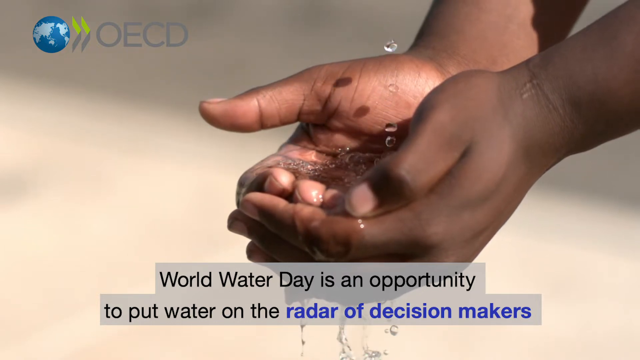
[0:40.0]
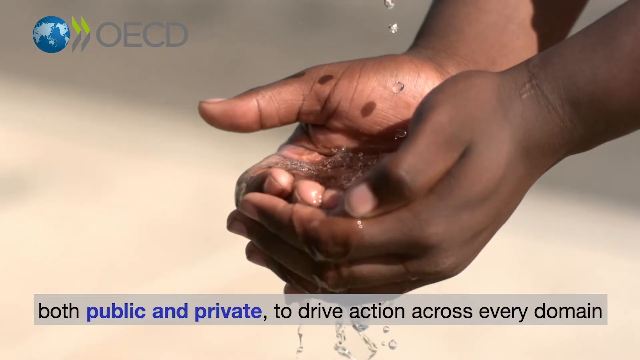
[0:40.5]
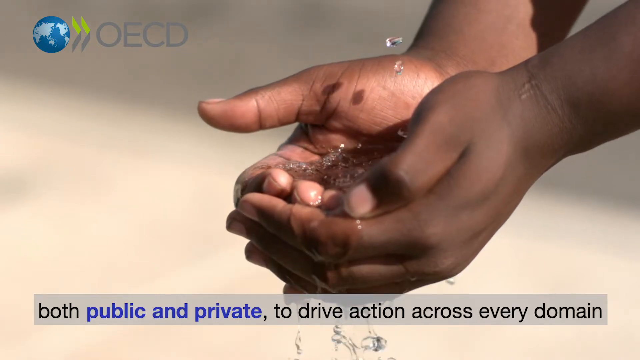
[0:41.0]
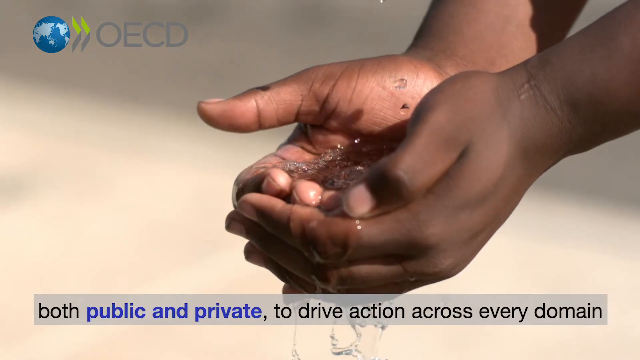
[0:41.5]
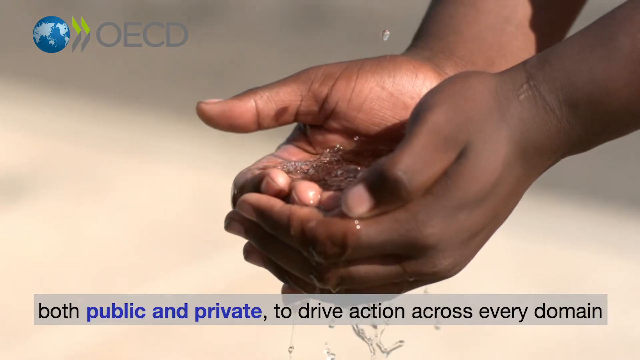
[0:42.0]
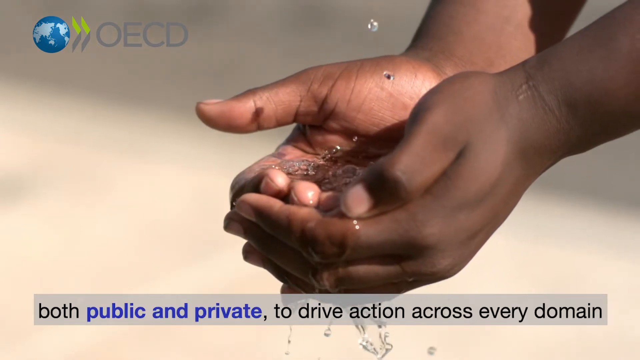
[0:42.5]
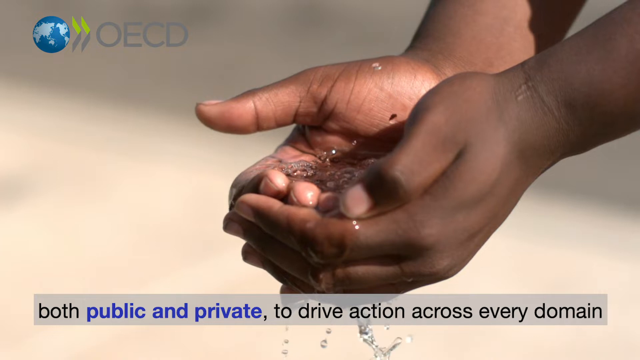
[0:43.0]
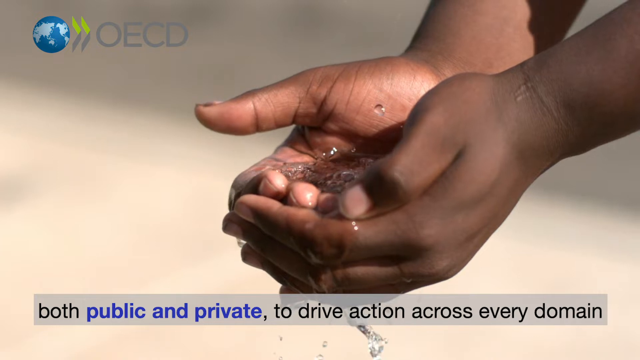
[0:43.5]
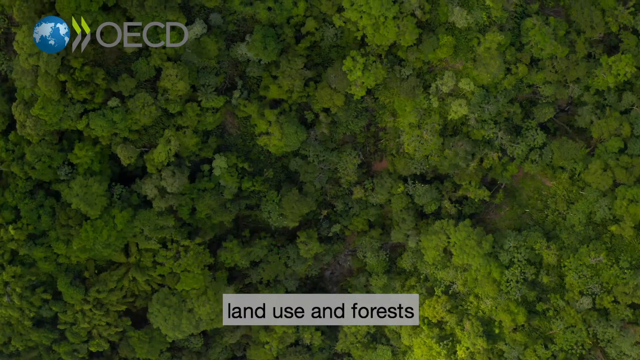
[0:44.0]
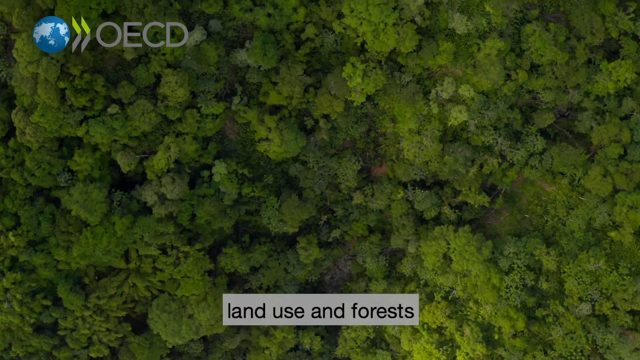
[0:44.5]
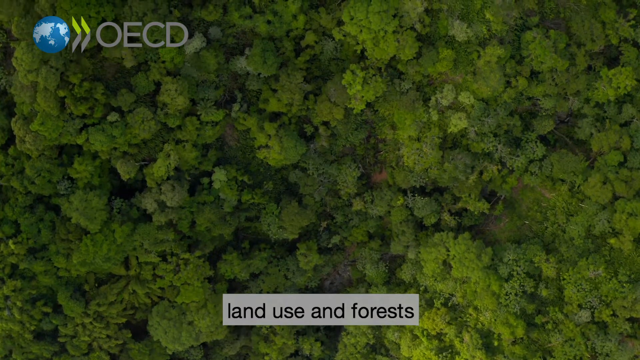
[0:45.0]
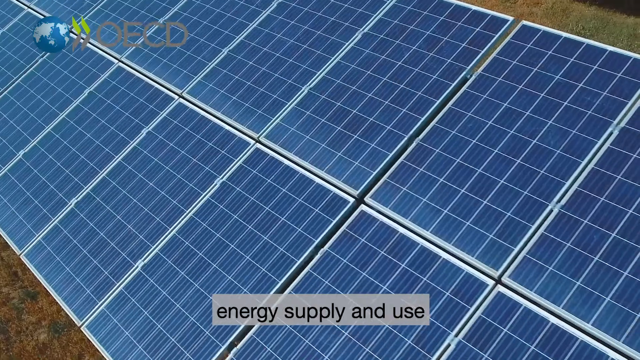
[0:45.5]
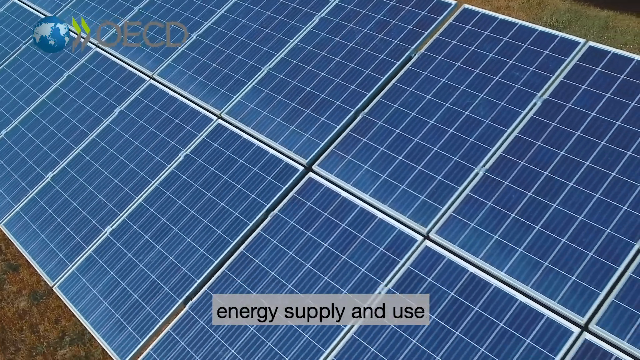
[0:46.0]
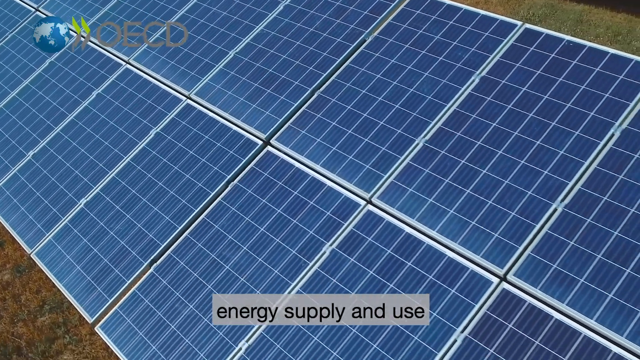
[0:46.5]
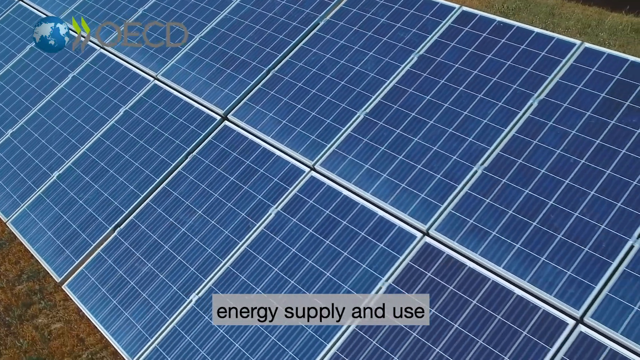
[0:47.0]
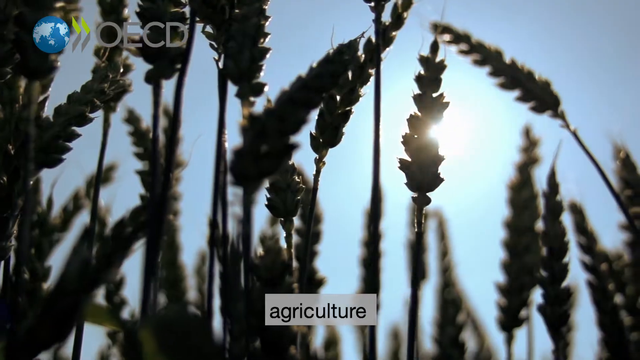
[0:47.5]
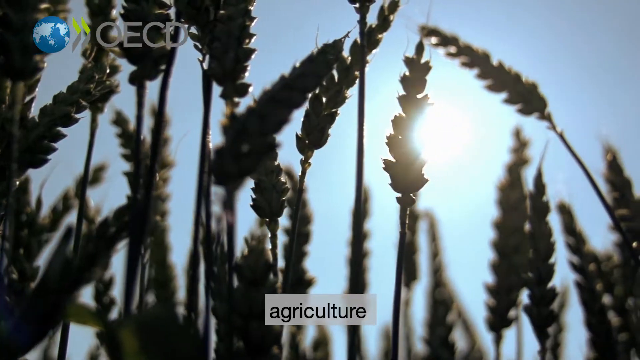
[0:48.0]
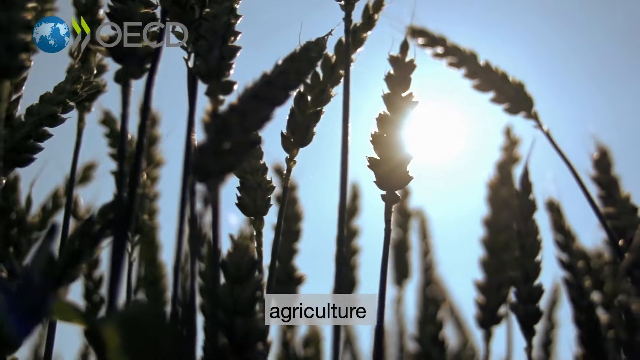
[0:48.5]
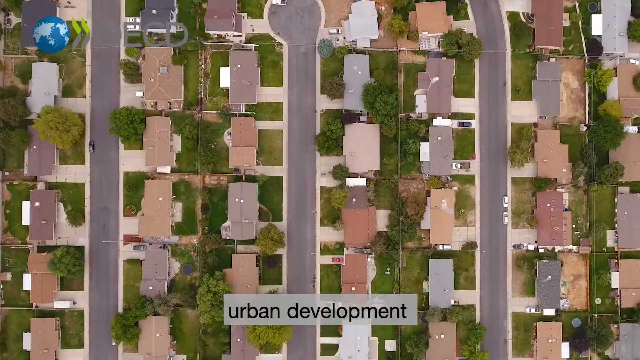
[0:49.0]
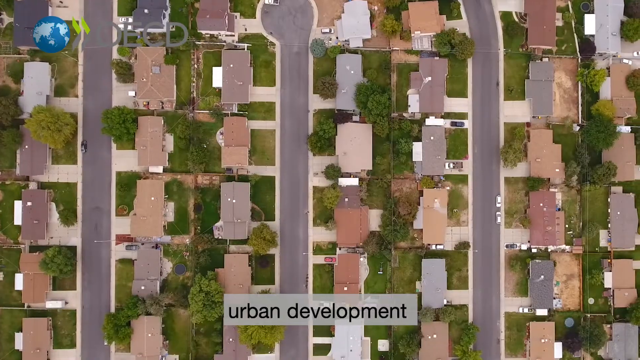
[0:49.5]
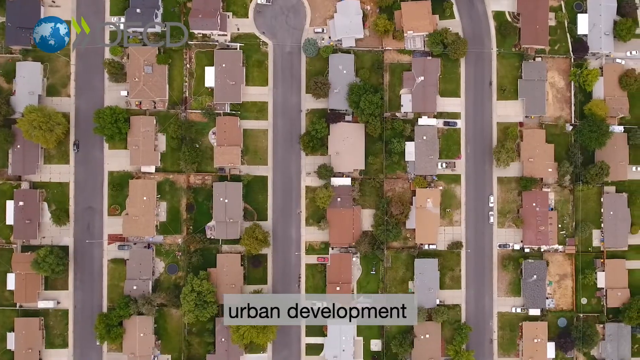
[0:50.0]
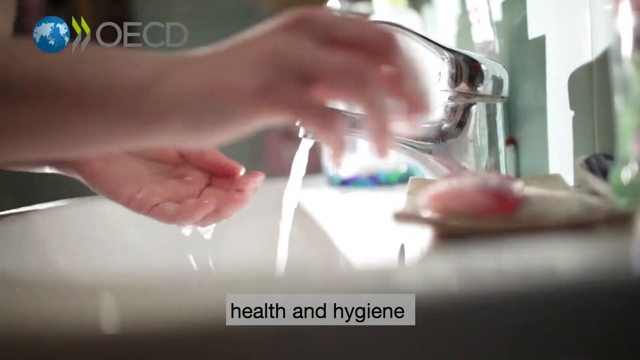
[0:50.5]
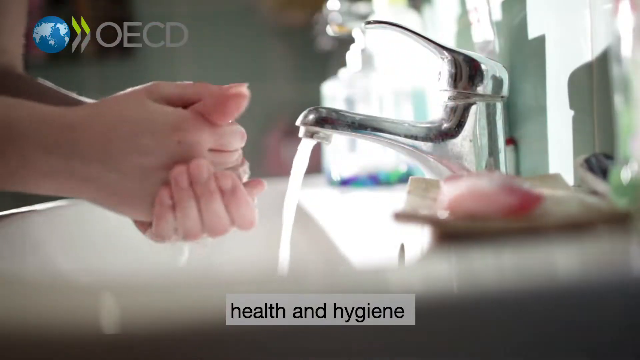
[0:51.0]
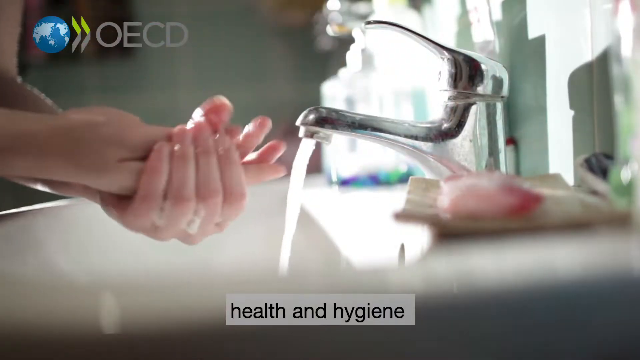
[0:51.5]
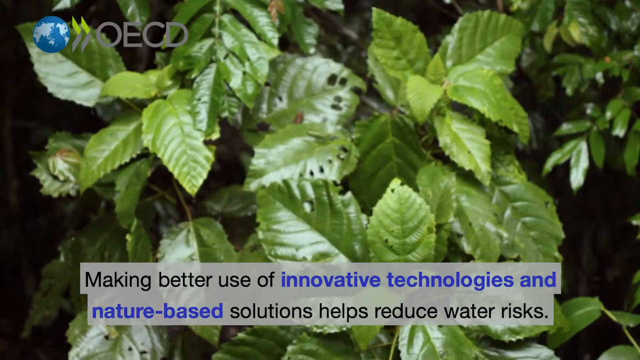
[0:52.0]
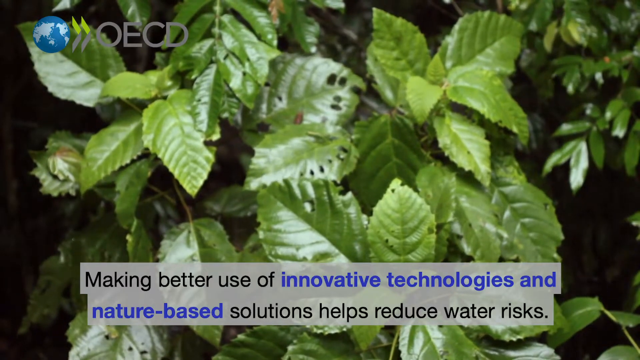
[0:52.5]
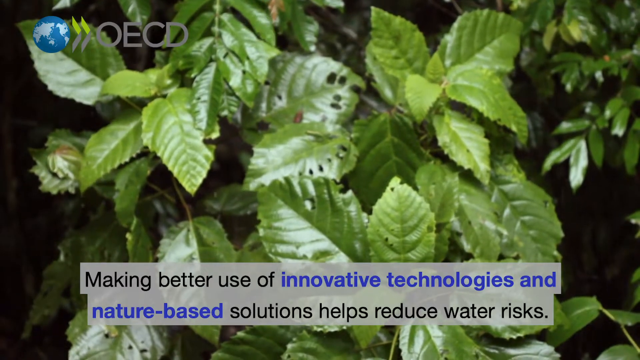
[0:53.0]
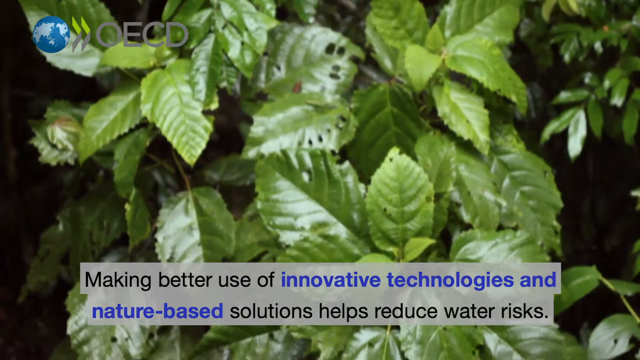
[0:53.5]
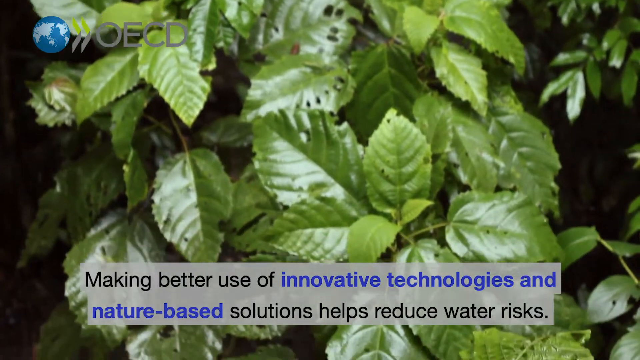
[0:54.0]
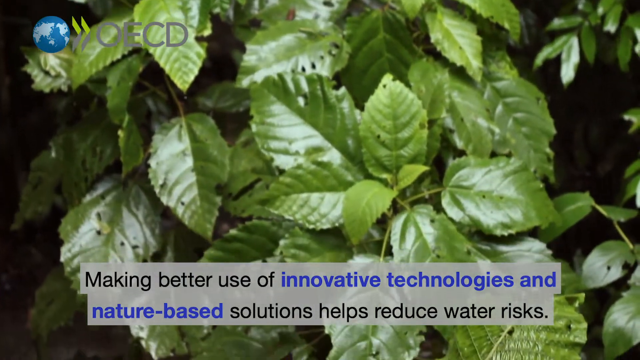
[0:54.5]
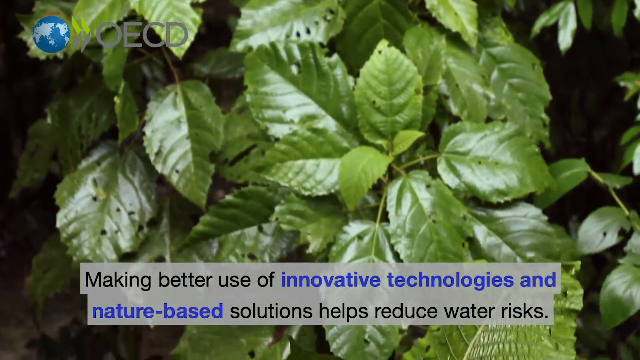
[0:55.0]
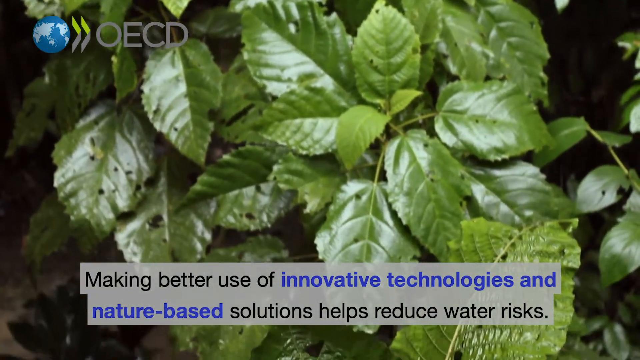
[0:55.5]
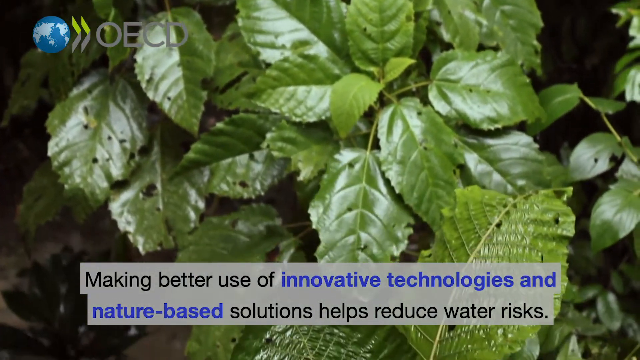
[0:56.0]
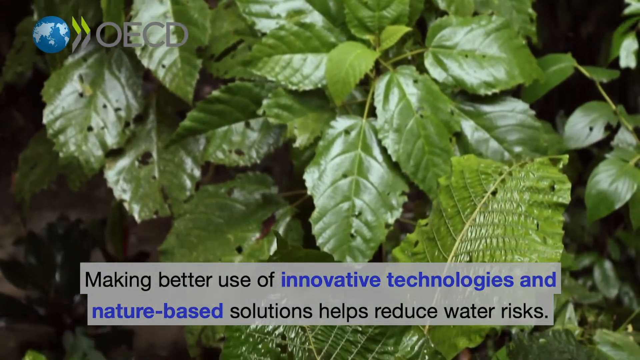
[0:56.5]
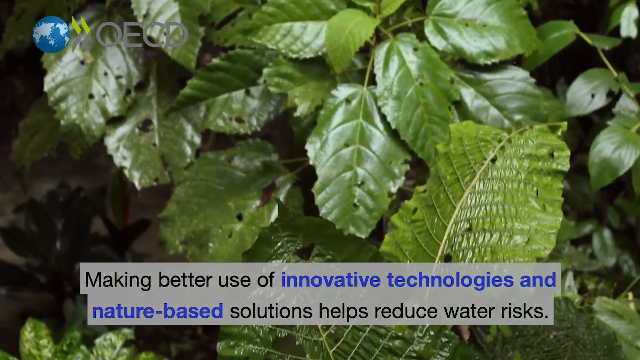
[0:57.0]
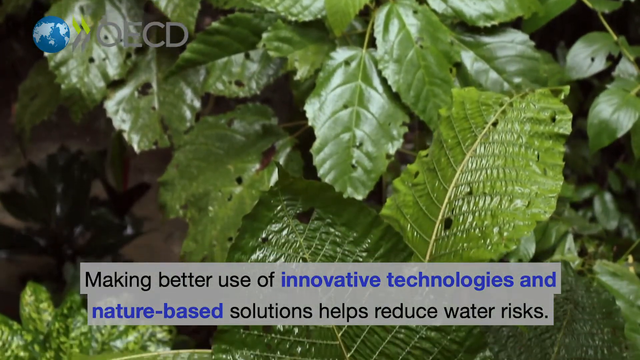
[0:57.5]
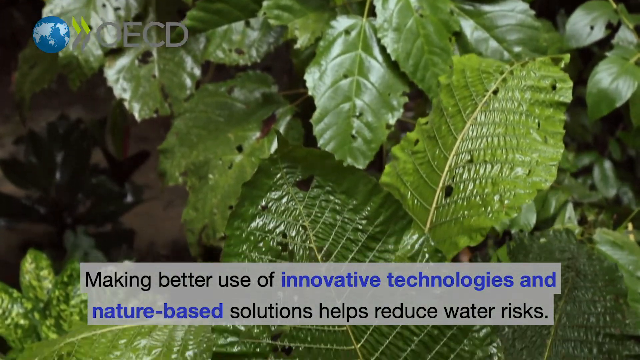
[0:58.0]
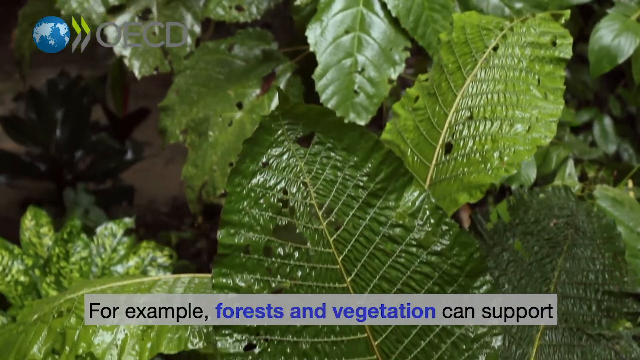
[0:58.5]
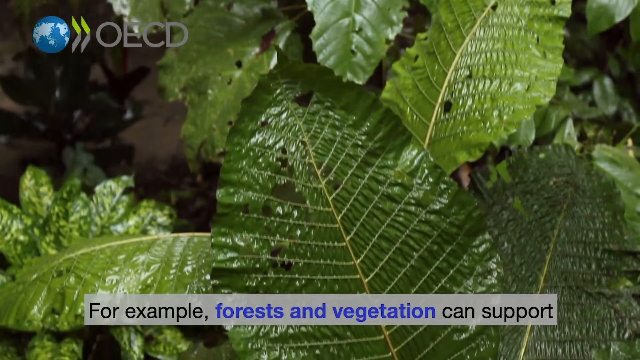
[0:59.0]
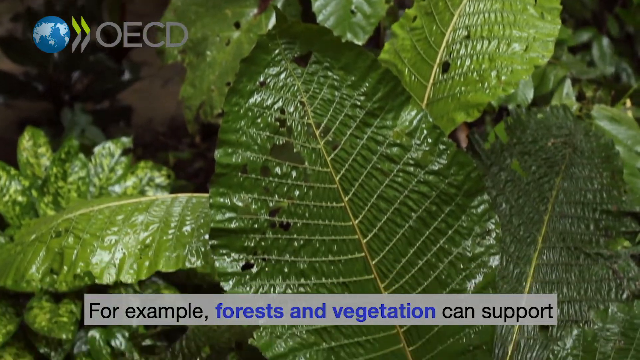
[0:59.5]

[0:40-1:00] Text describes World Water Day as an opportunity to put water on the radar of decision makers, both public and private, to drive action across every domain. A series of images follows: a view of a forest for land use, solar panels for energy, crops for agriculture, and housing development for urban development. Someone then washes their hands, relating to health and hygiene. A summary reads that making better use of innovative technologies and nature-based solutions helps reduce water risks, set against vegetation in the background where rain filters down naturally in a forest environment.